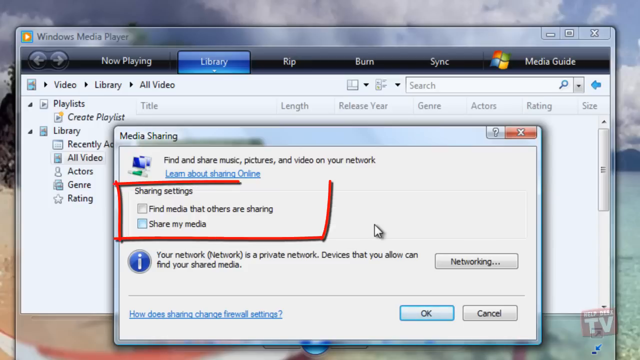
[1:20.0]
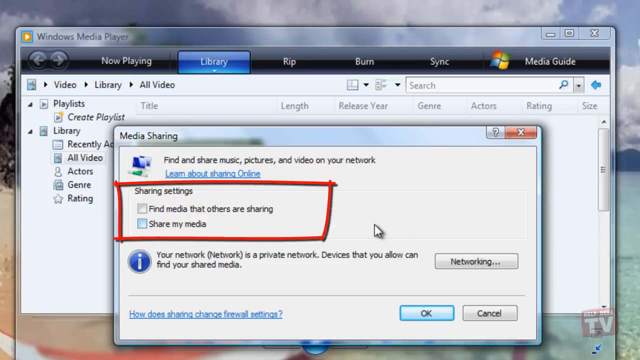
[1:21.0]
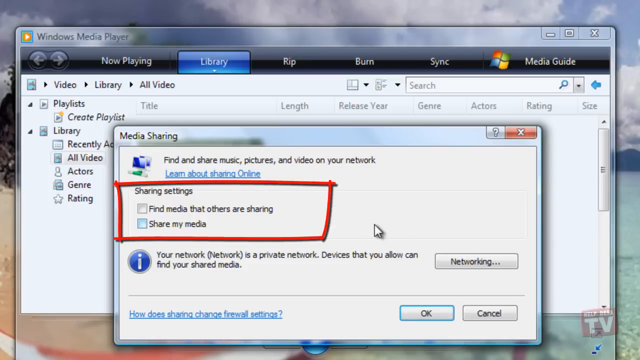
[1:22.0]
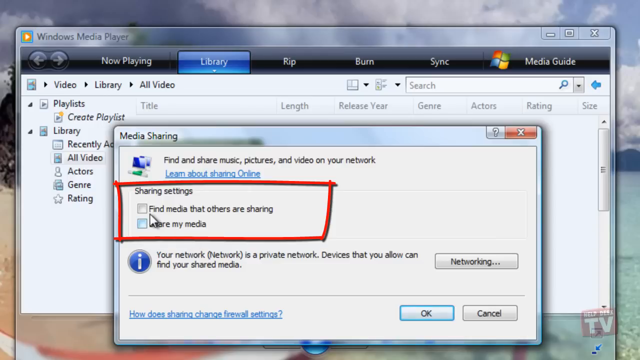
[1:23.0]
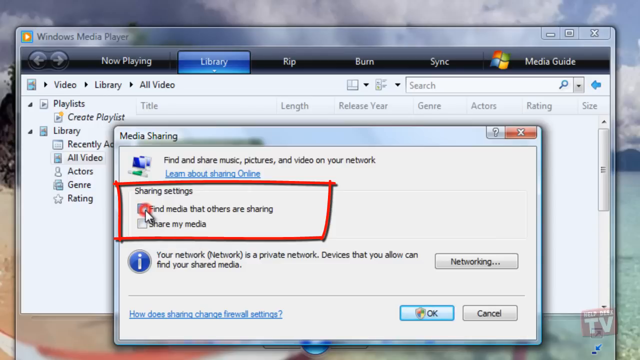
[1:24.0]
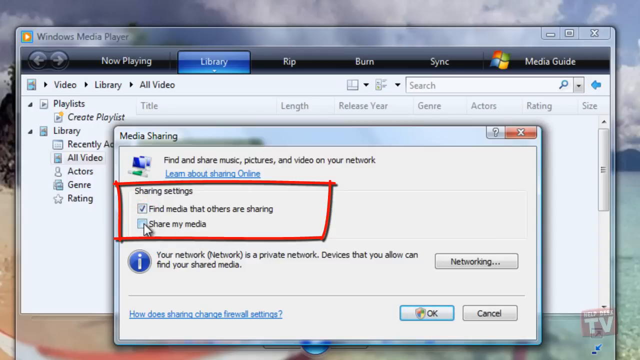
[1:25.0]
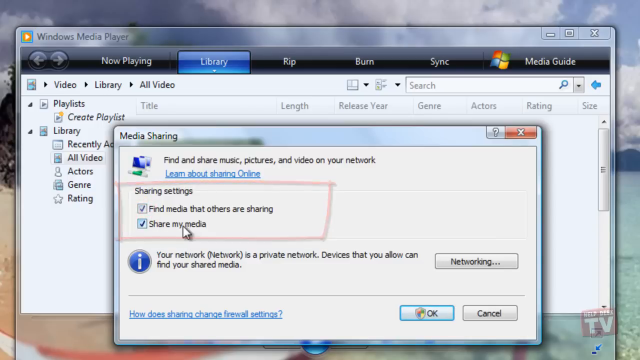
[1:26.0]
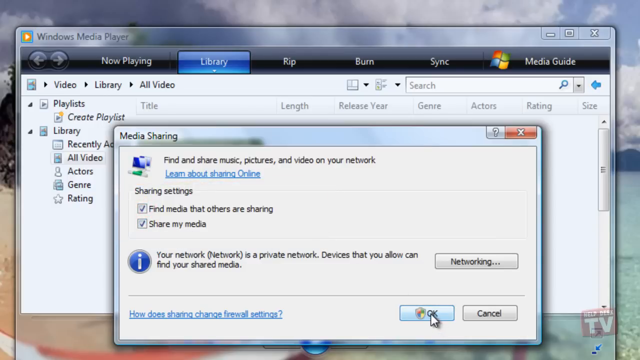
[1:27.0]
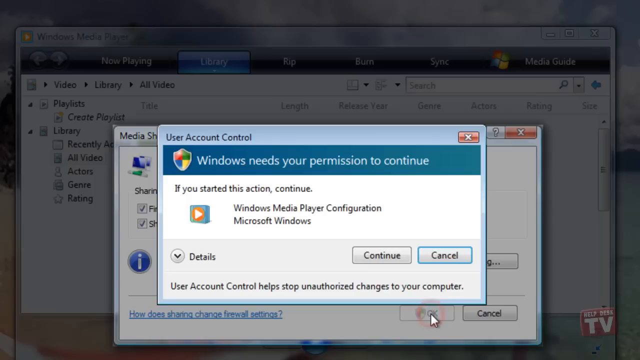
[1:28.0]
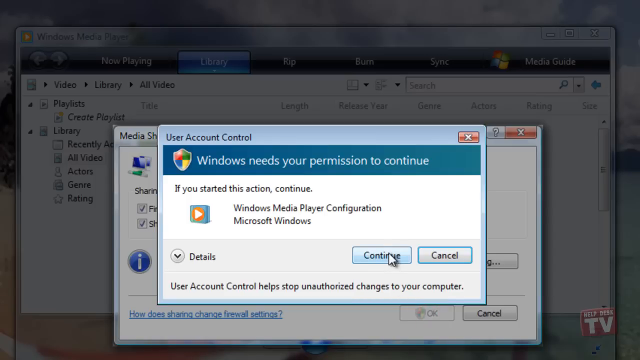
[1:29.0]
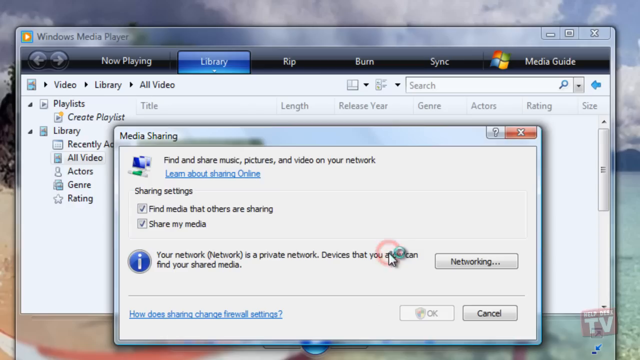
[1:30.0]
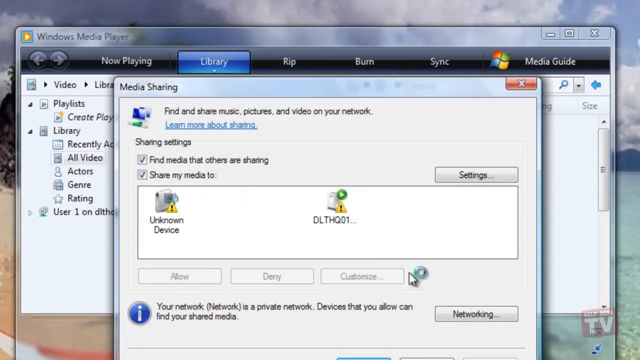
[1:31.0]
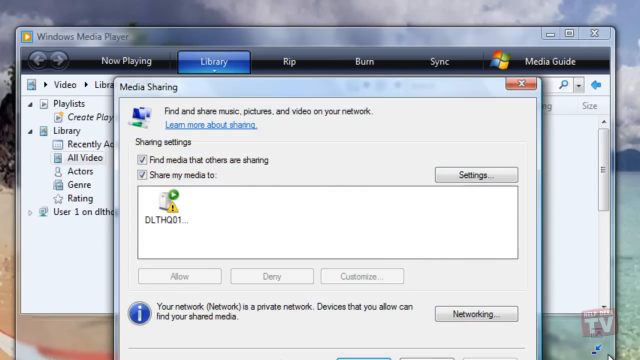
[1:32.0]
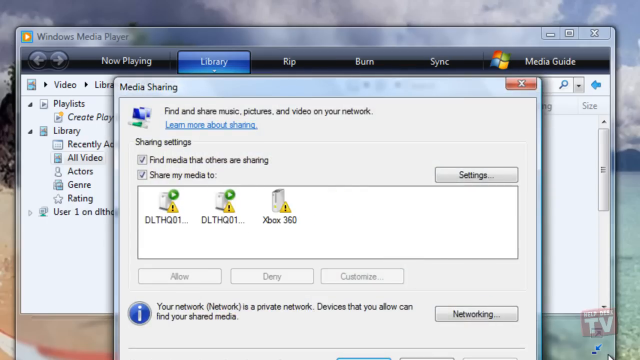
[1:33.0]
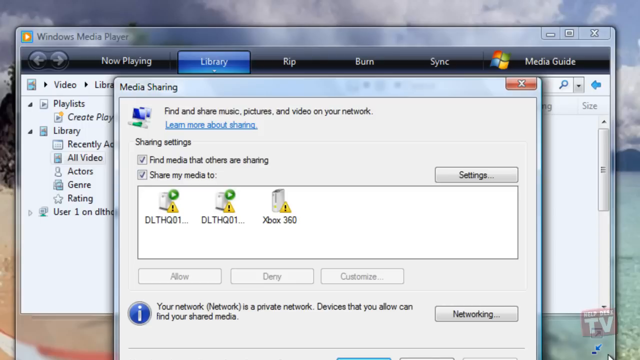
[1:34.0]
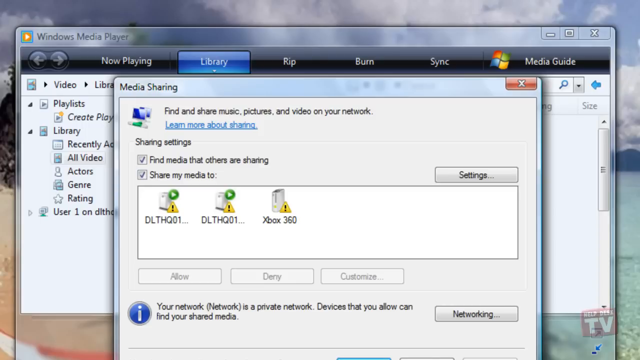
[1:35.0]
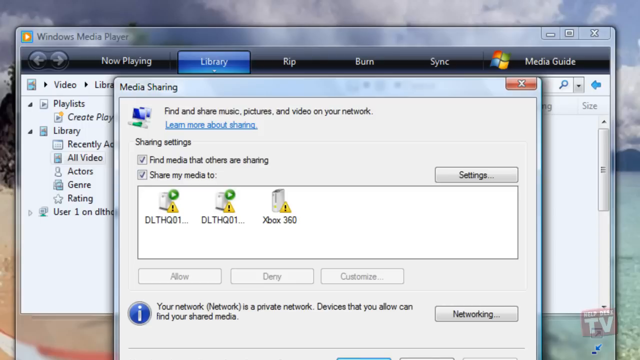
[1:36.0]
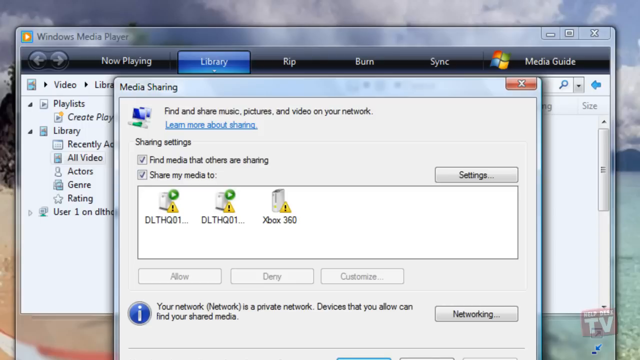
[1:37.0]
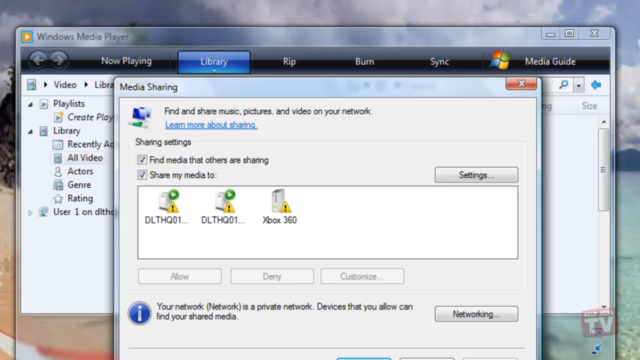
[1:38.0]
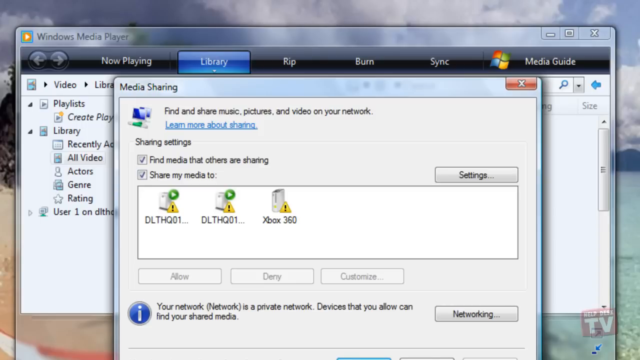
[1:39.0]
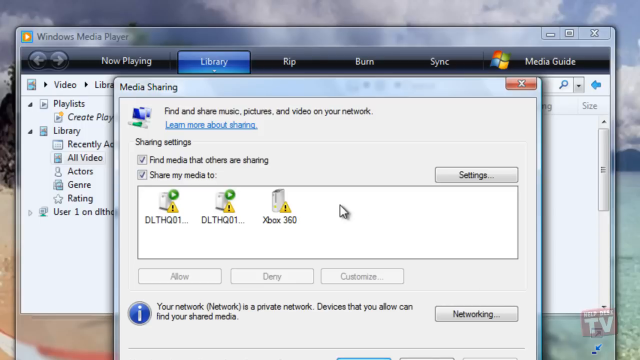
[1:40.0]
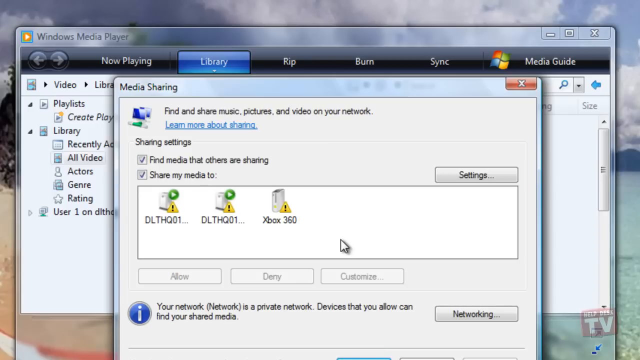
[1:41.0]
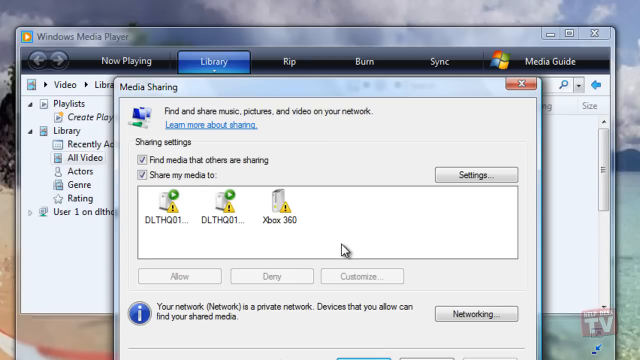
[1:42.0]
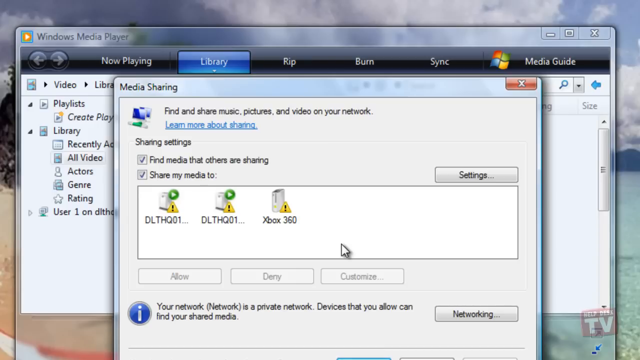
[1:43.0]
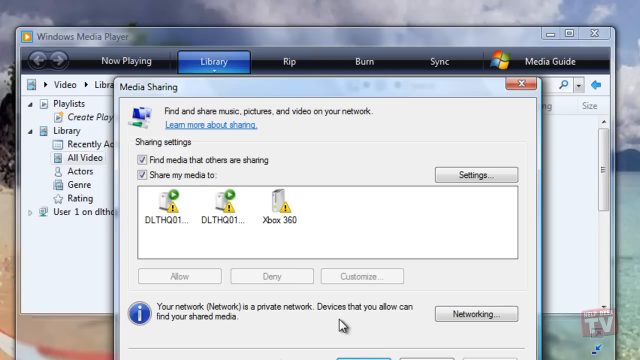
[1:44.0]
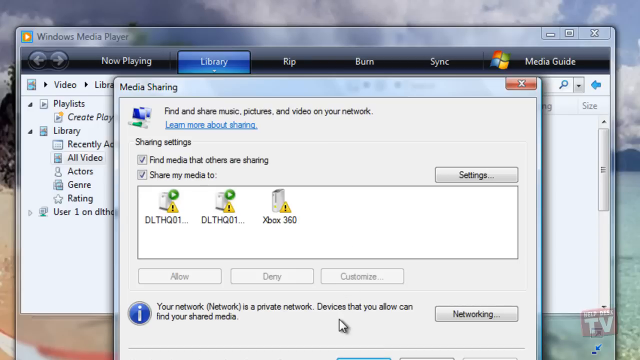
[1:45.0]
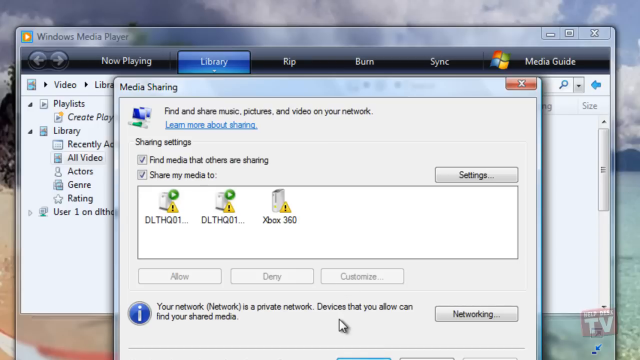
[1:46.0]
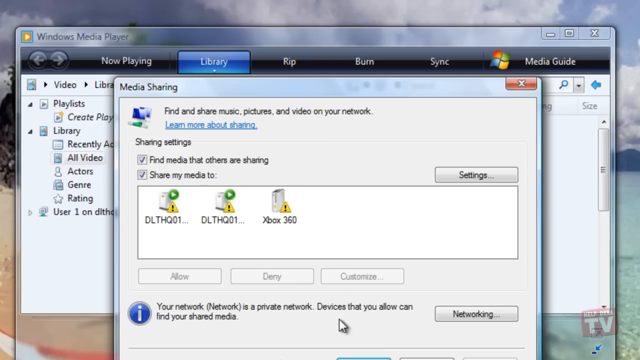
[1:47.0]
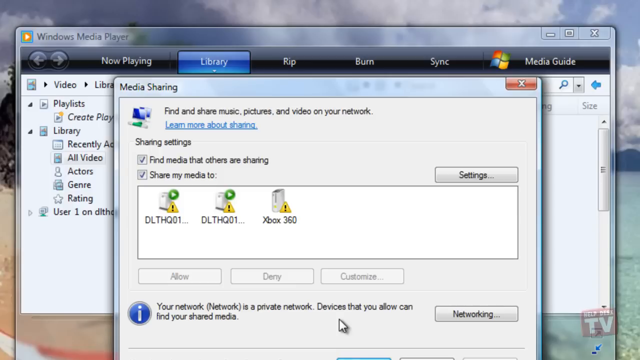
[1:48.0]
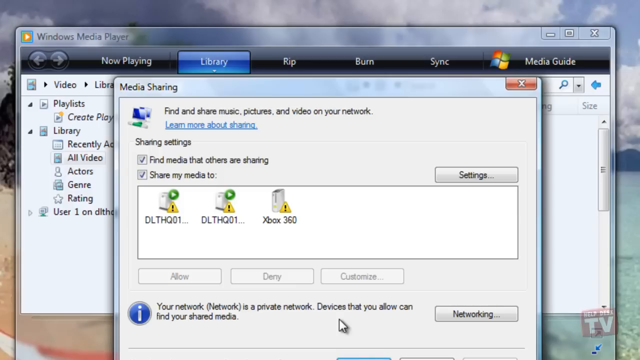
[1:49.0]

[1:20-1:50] Under the sharing settings are two options with checkboxes, "find media that others are sharing" and "share my media", neither of them checked. He checks "find media that others are sharing" and then "share my media". The red box disappears, the cursor goes down to the bottom, and he clicks OK. A User Account Control window pops up saying Windows needs your permission to continue, with the text "If you started this action, continue", "Windows Media Player configuration" and "Microsoft Windows", and buttons for Continue and Cancel. He clicks Continue; that window closes, then the other window closes, and another window titled Media Sharing pops up. Its title line reads "find and share music, pictures and video on your network", and beneath it the sharing settings show the two options checked. Under "share my media to:" are an icon for an unknown device and another device icon labeled "DLTHQ01". There is also a Settings button, and the cursor goes down near a button that says "networking". More options then appear under share my media to: one says "dlthq01", another is also "dlthq01", and another is "Xbox360". This stays on screen for a couple of seconds while the cursor moves around the window.